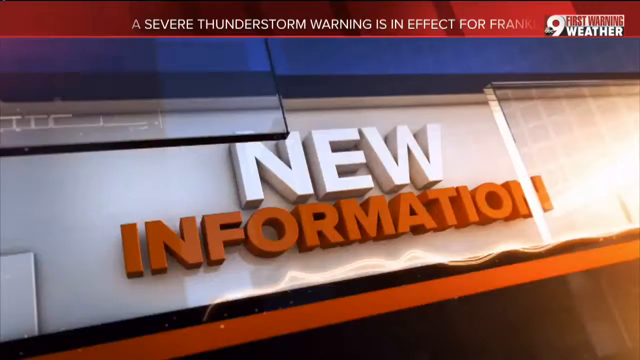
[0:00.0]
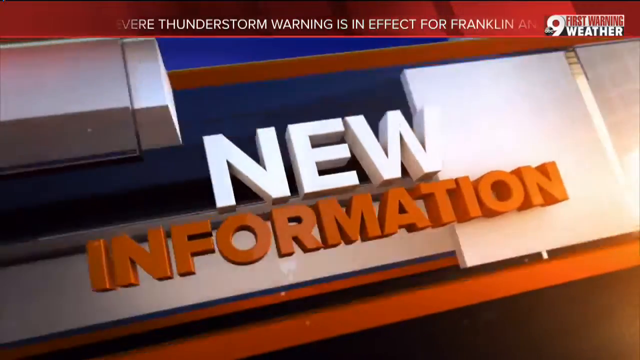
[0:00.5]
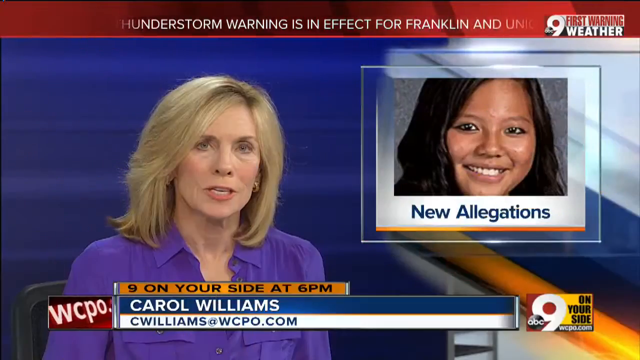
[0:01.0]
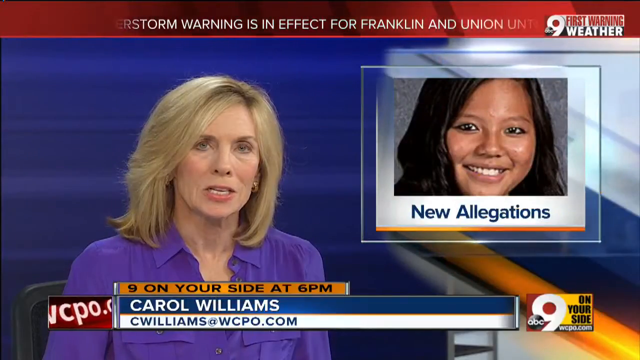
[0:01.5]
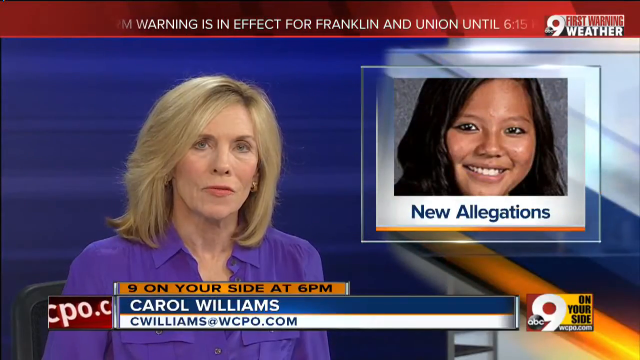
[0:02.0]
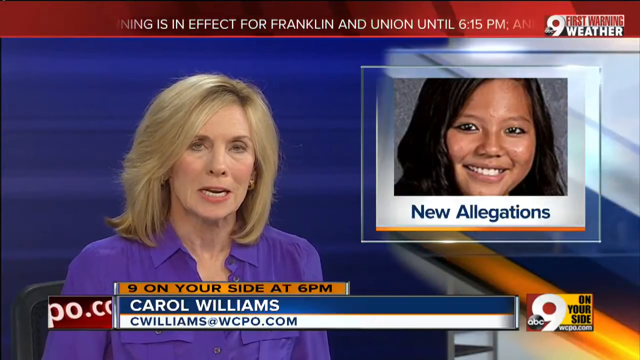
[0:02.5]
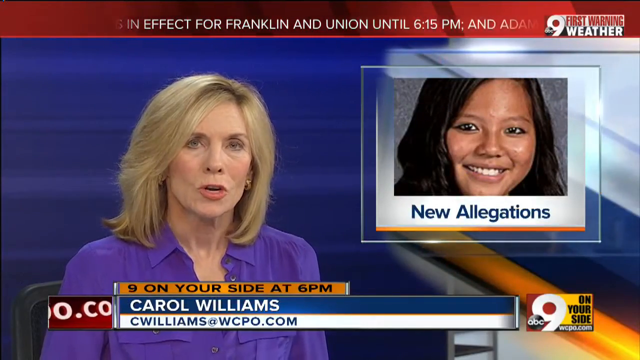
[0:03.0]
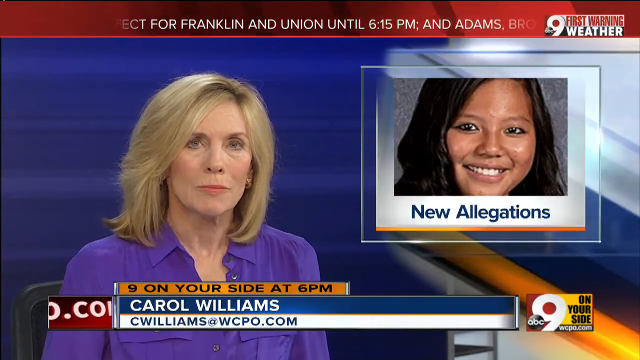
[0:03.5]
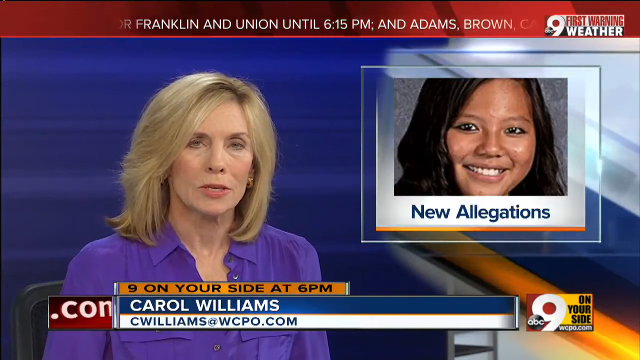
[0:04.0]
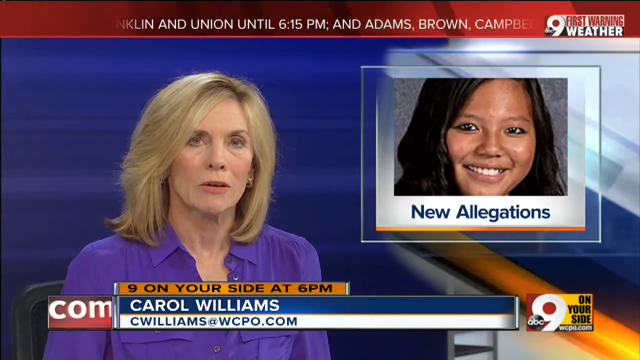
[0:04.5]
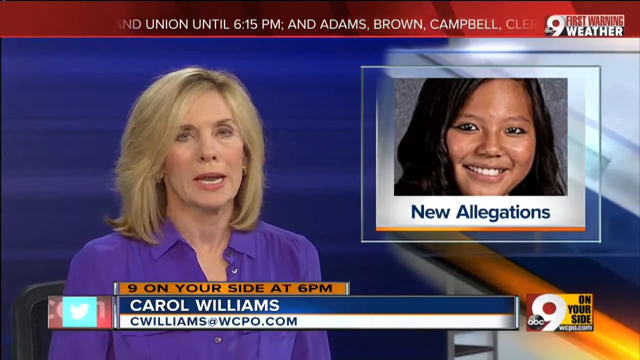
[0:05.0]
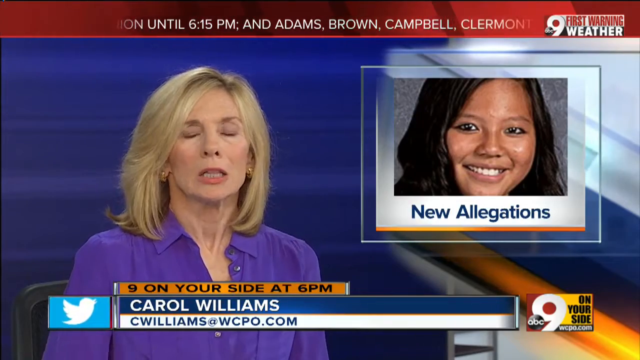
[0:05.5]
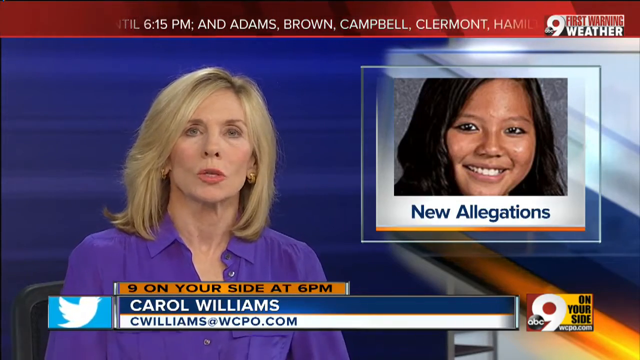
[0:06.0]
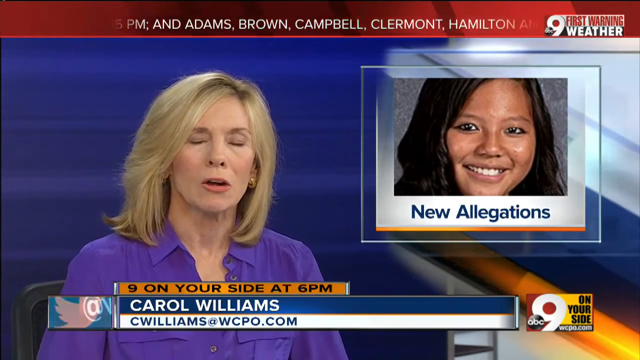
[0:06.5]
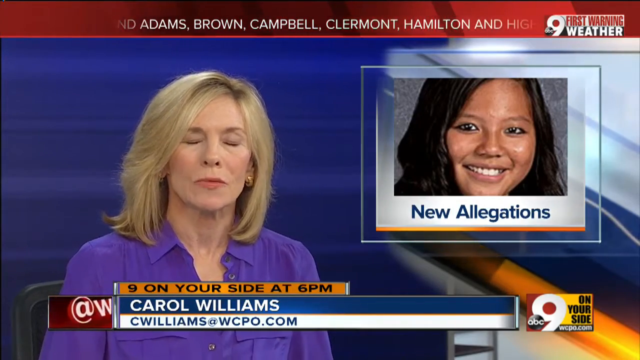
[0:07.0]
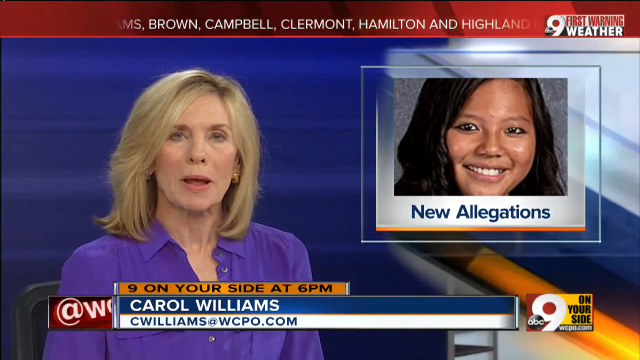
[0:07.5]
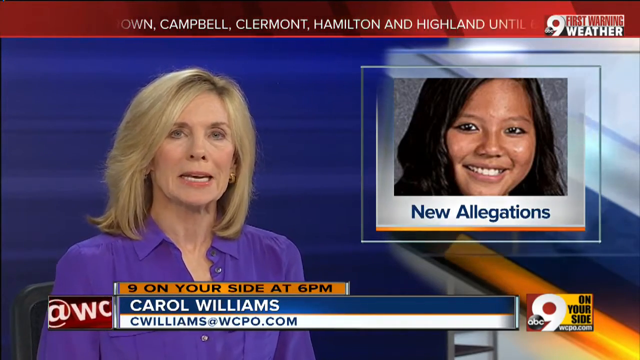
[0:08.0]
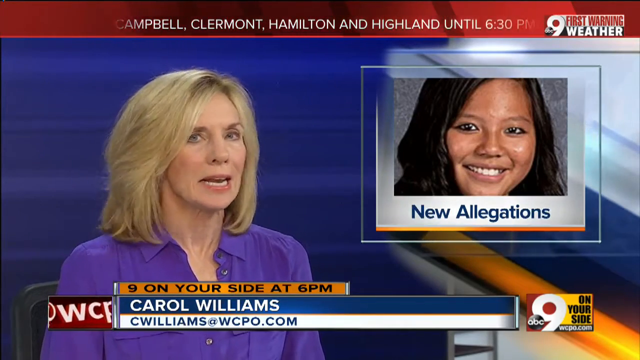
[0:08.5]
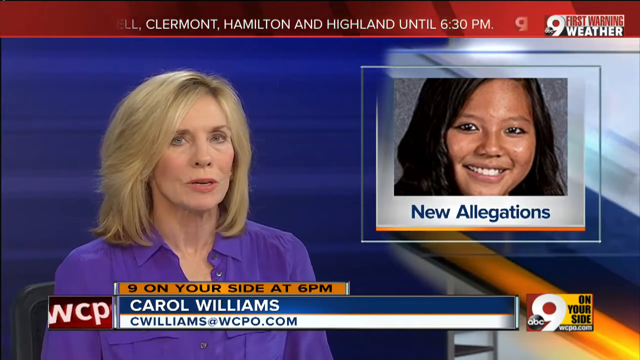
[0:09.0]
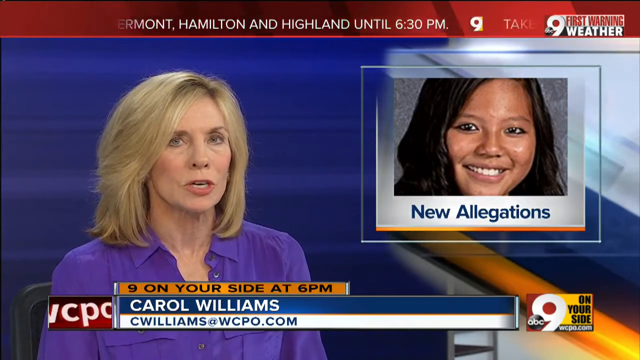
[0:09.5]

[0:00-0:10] A news-style video with a blue background shows an older woman, probably between the ages of 40 and 50, wearing a purple shirt. New allegations are shown, along with a younger woman with kind of black hair; the other woman has kind of shorter, styled hair. The video then shows Kara Williams, apparently the news anchor, in connection with the new allegations regarding the young girl seen on screen.